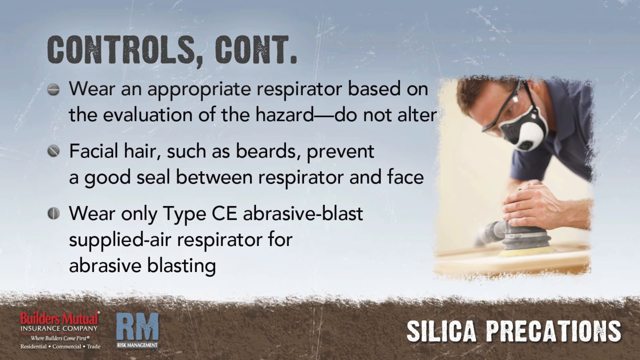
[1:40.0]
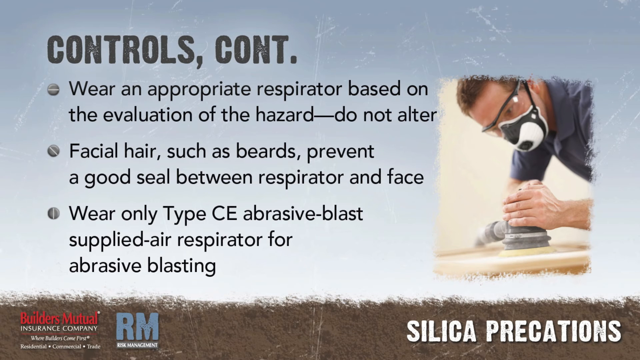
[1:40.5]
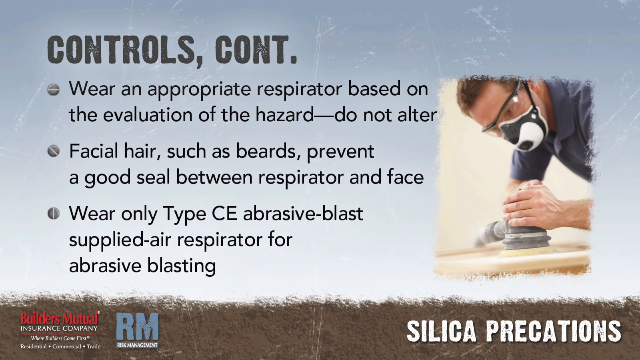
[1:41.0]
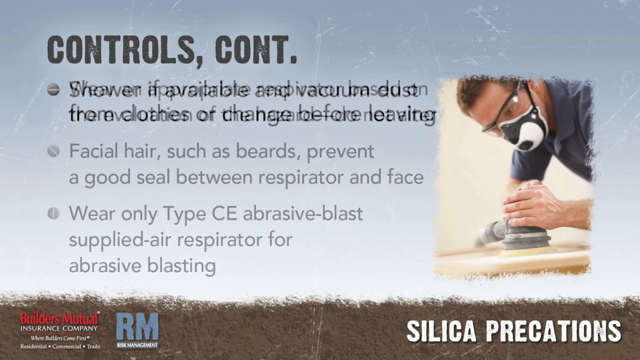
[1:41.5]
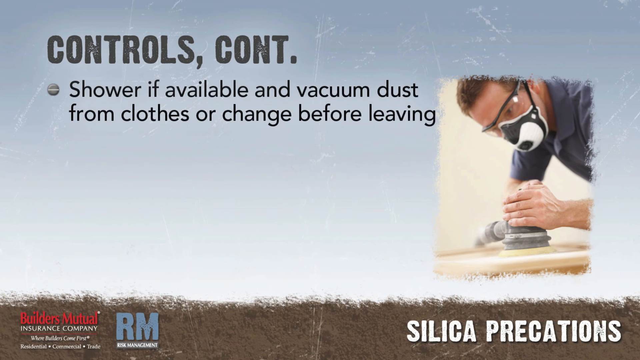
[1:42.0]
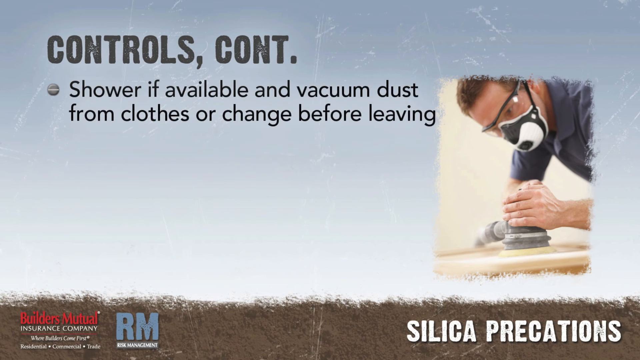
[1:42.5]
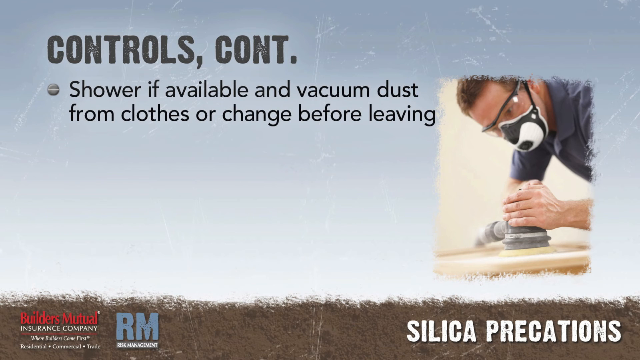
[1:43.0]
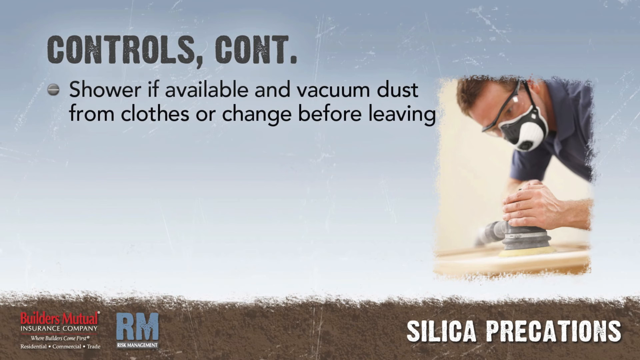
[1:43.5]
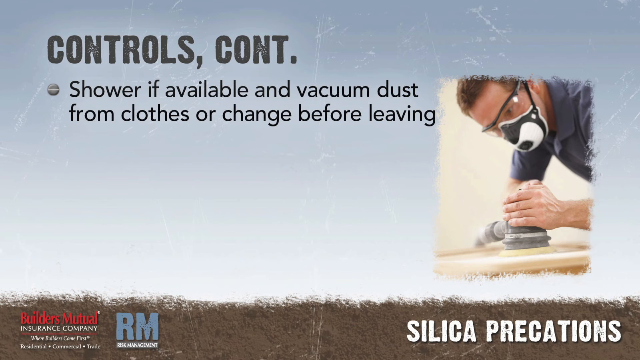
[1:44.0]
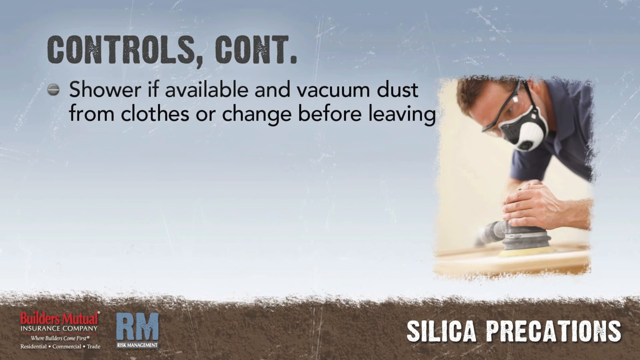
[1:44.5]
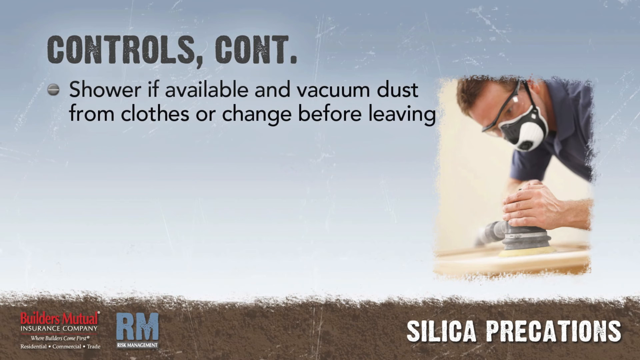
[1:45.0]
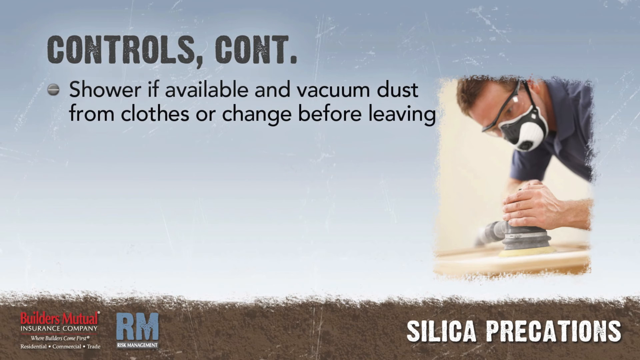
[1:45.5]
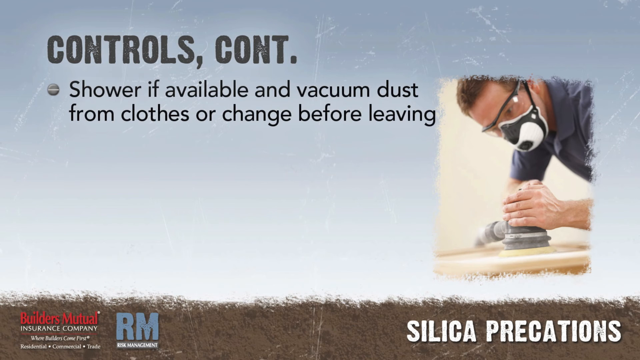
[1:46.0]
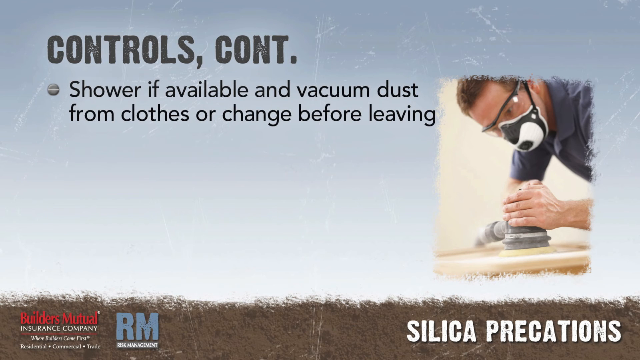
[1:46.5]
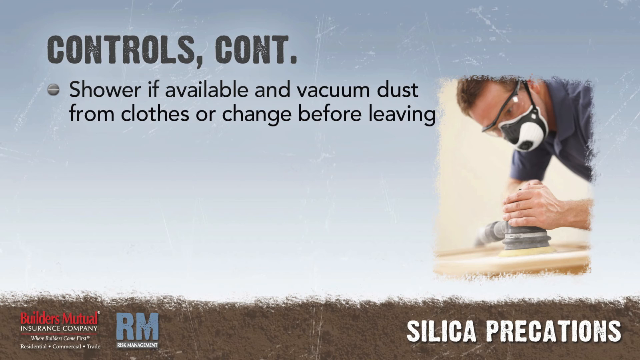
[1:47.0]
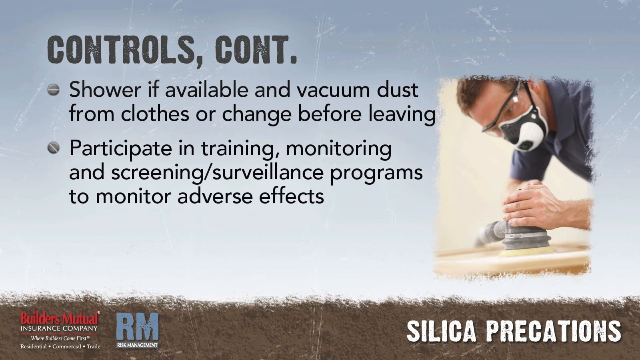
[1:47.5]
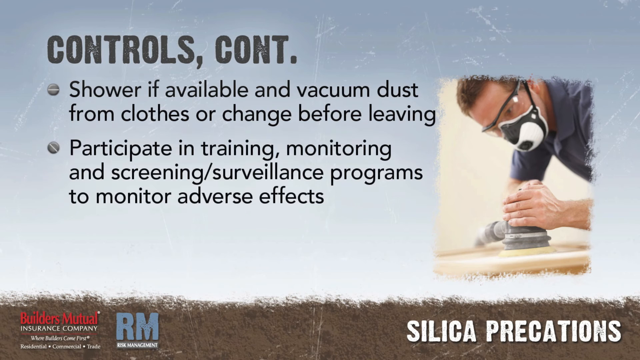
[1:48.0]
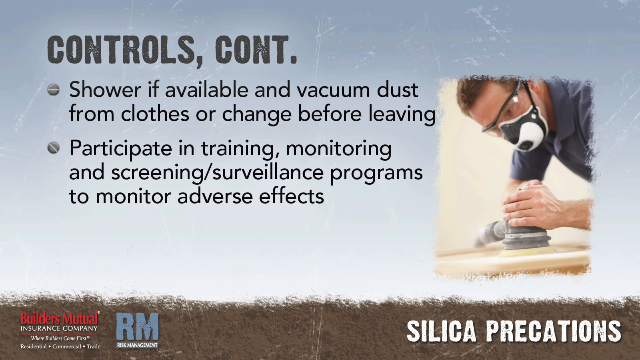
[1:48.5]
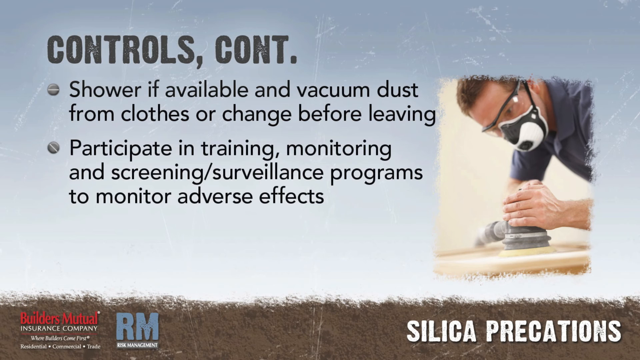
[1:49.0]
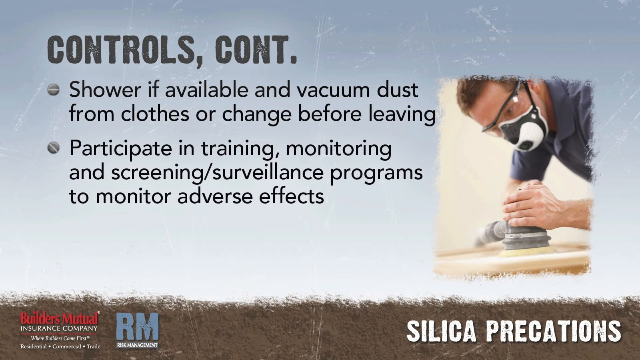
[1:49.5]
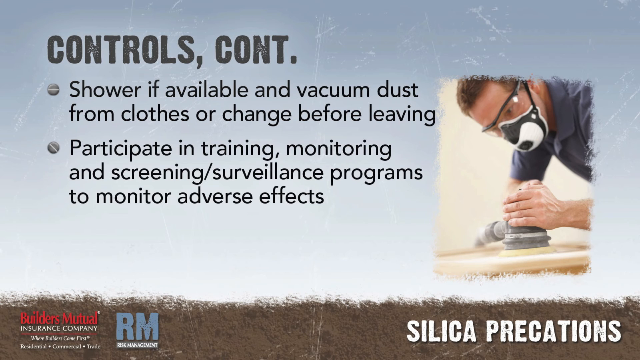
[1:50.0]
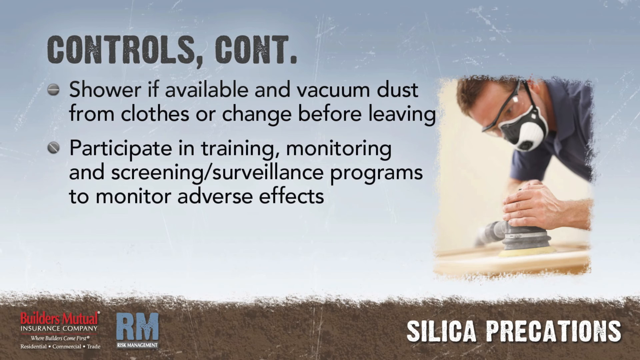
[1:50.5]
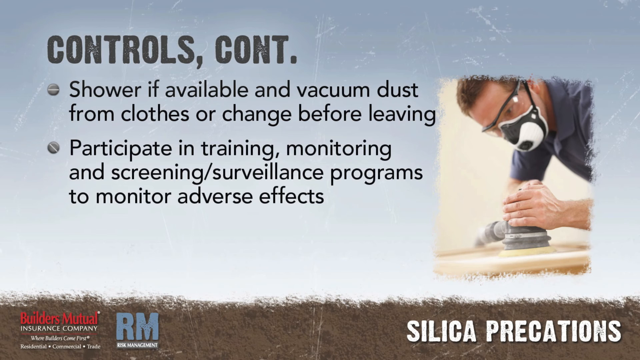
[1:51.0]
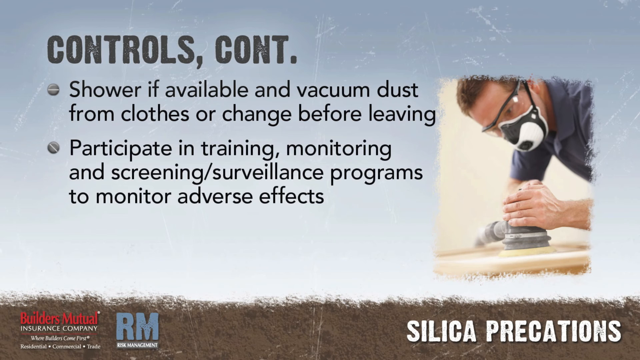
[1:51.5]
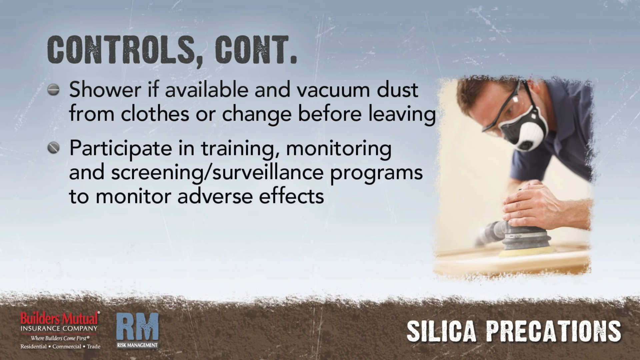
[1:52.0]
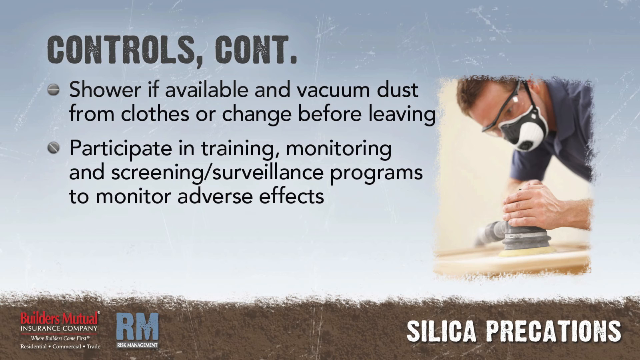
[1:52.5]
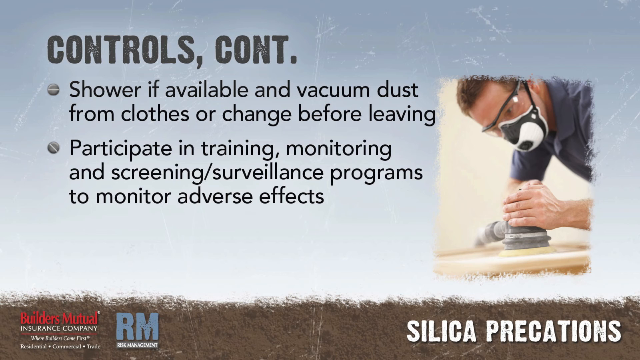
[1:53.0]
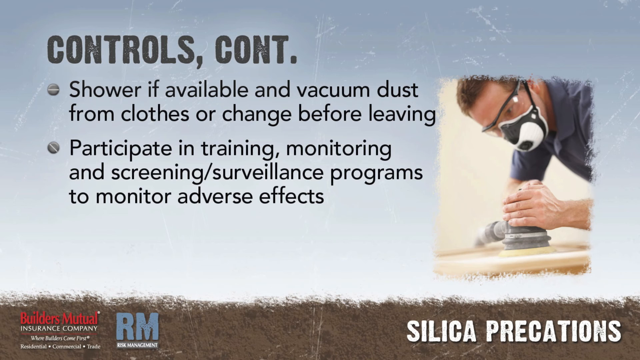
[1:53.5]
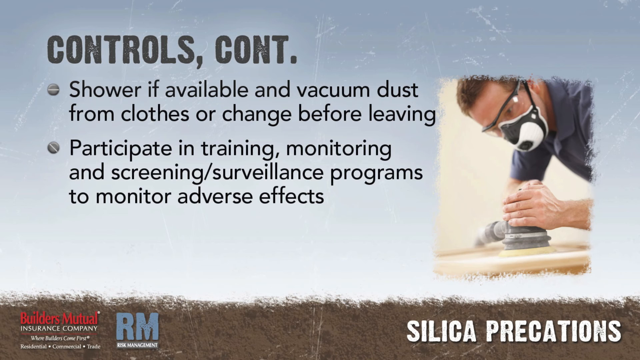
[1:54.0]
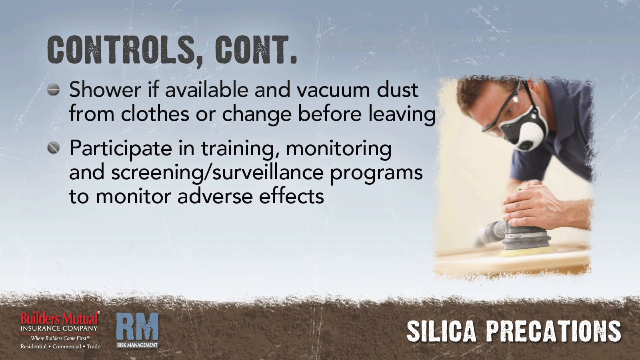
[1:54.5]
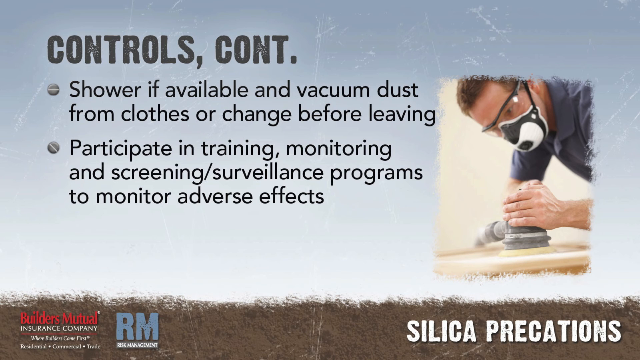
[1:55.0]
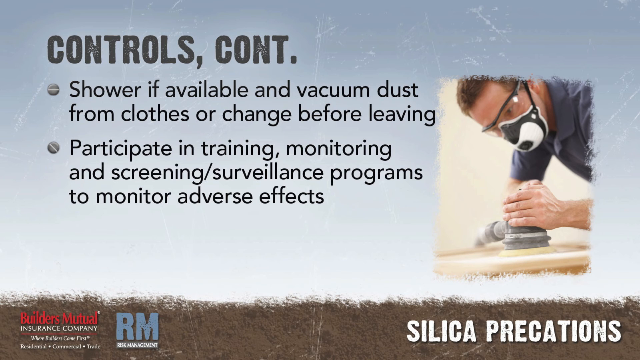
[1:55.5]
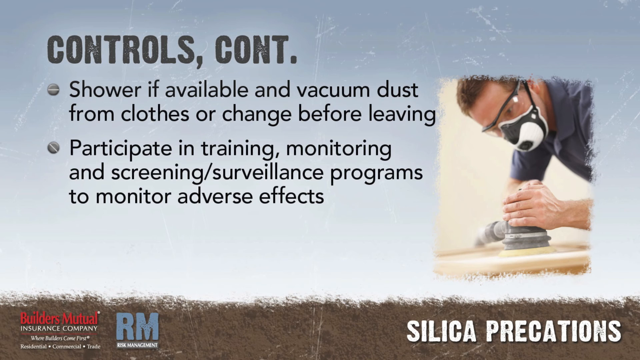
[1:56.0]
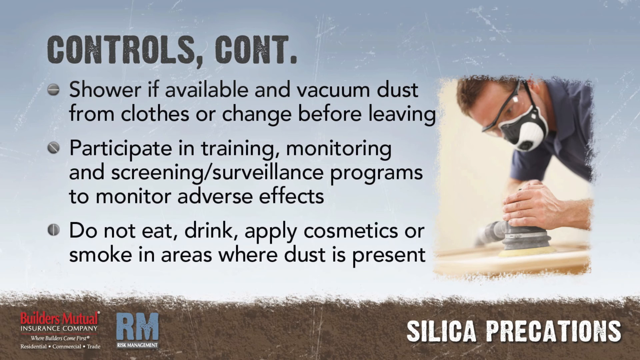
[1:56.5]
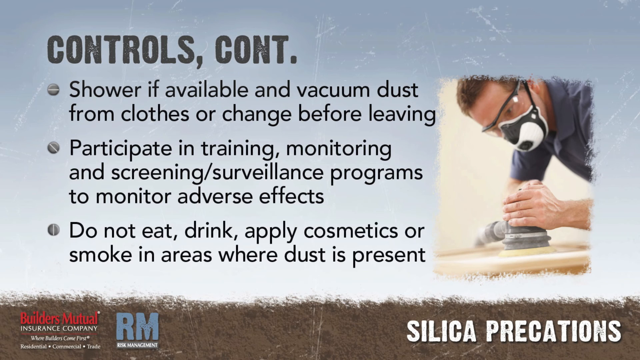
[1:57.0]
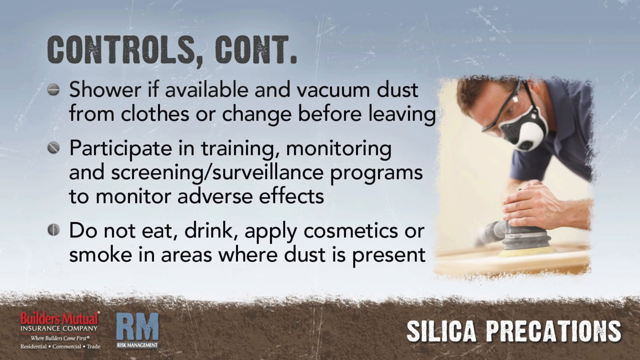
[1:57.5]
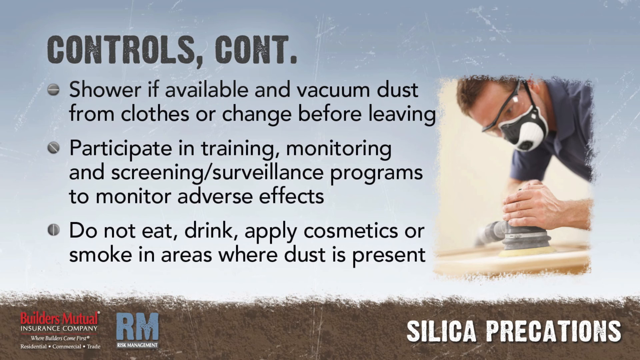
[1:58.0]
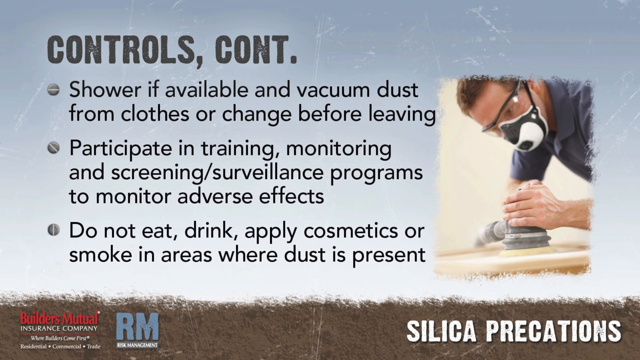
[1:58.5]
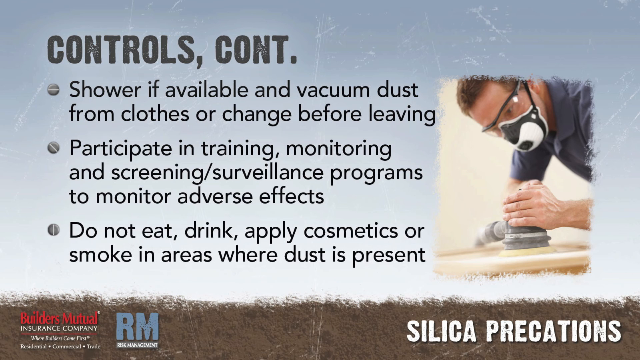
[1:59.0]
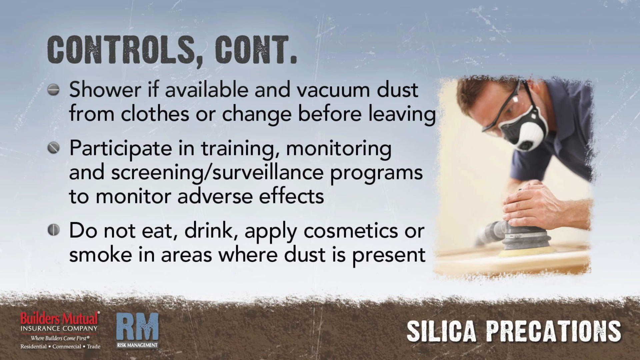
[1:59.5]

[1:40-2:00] The three bullet points disappear and a new one forms at the top, continuing the controls section: "Shower if available and vacuum dust from clothes or change before leaving." Another appears below it: "Participate in training, monitoring, and screening surveillance programs to monitor abrasive effects." A third appears at the bottom: "Do not eat, drink, apply cosmetics, or smoke in areas where dust is present." The image of the man on the right side continues: he wears a black and white face mask and clear safety glasses, has short brown hair, and wears a blue short-sleeve polo shirt. He operates a sanding machine with his left hand, sanding down a piece of light brown wood.